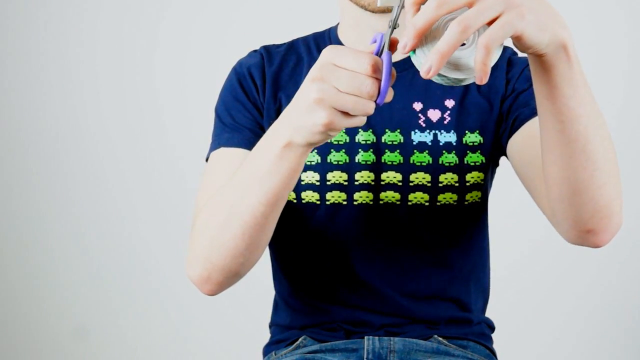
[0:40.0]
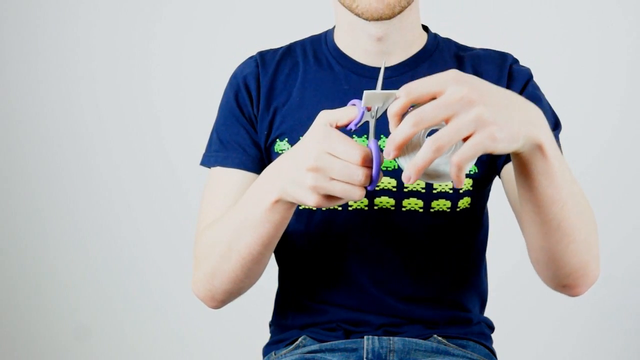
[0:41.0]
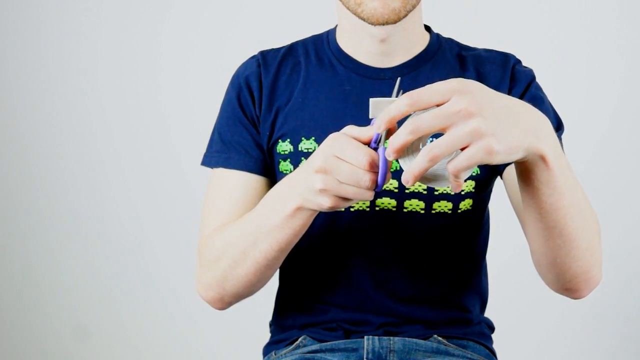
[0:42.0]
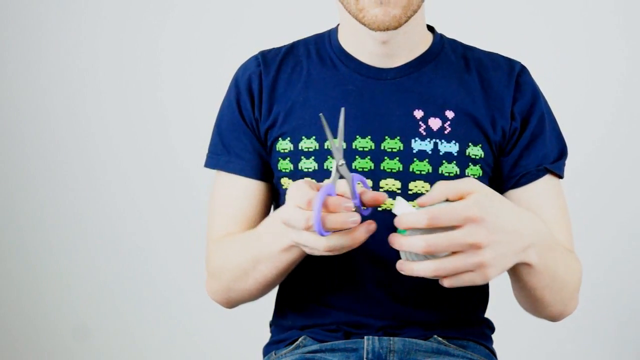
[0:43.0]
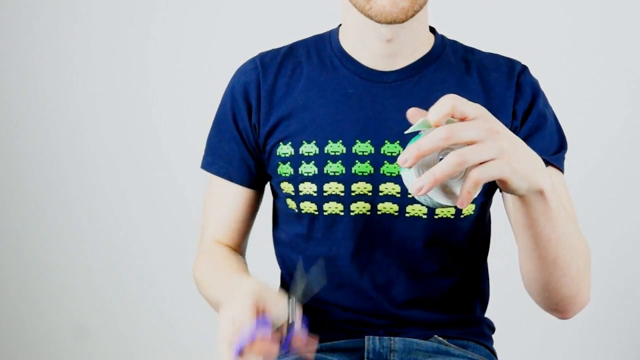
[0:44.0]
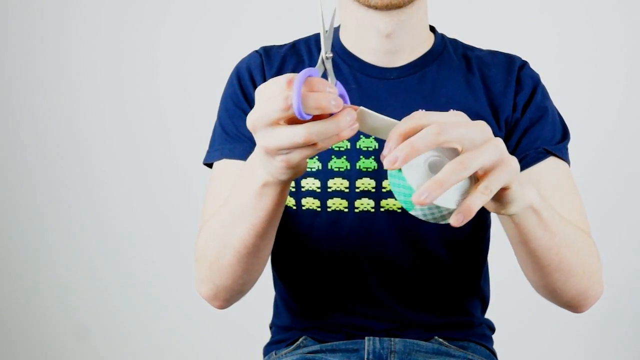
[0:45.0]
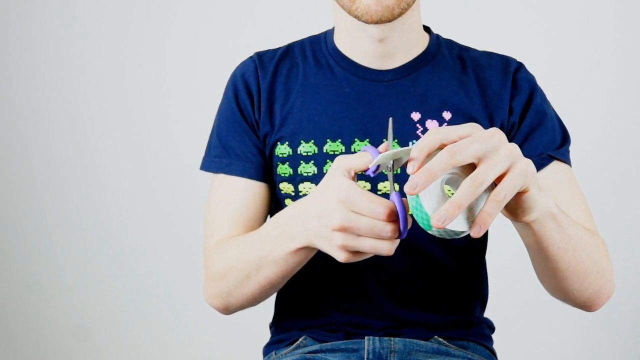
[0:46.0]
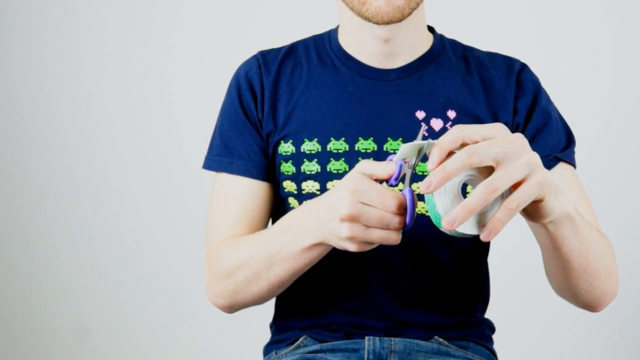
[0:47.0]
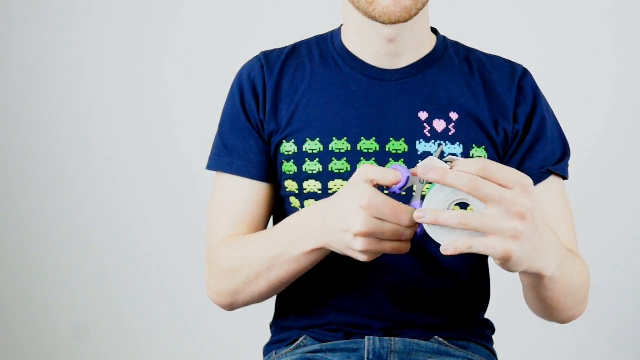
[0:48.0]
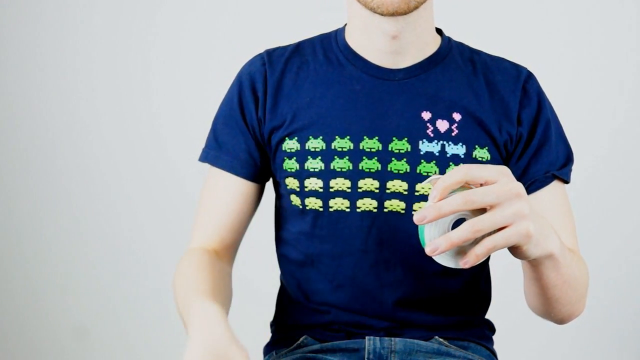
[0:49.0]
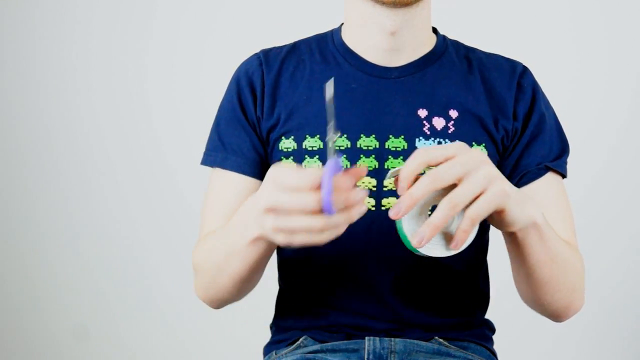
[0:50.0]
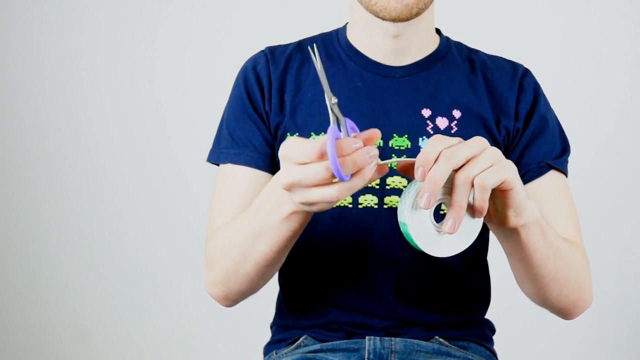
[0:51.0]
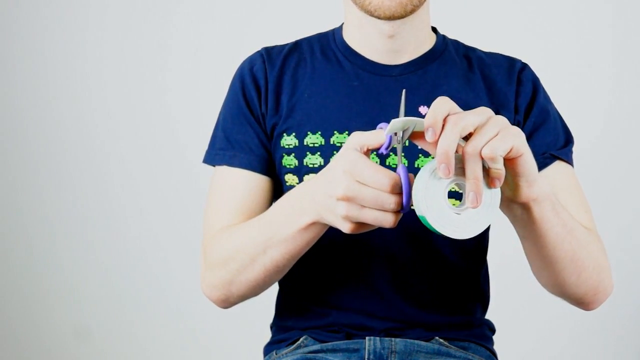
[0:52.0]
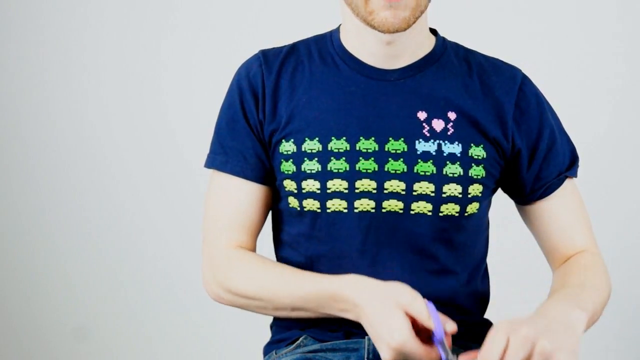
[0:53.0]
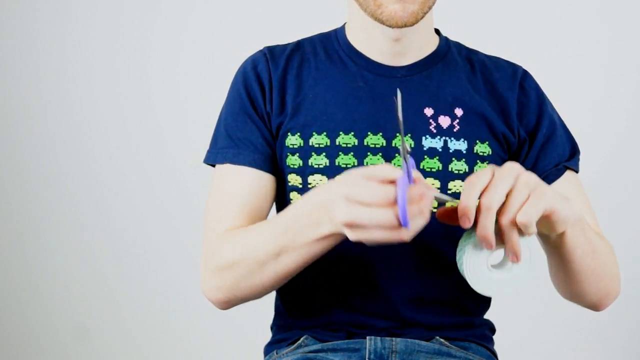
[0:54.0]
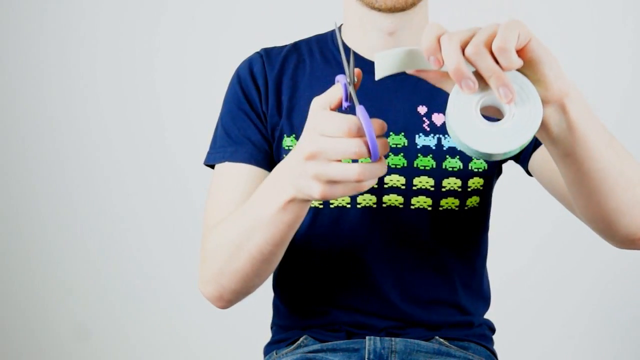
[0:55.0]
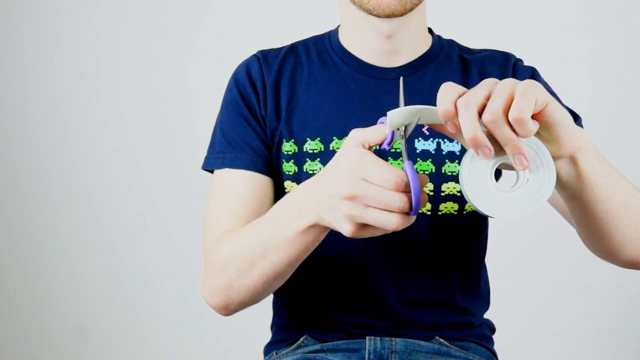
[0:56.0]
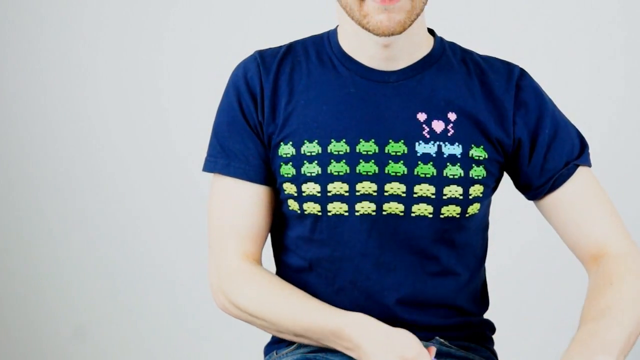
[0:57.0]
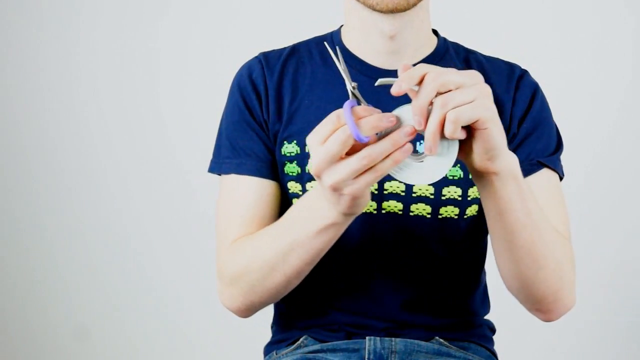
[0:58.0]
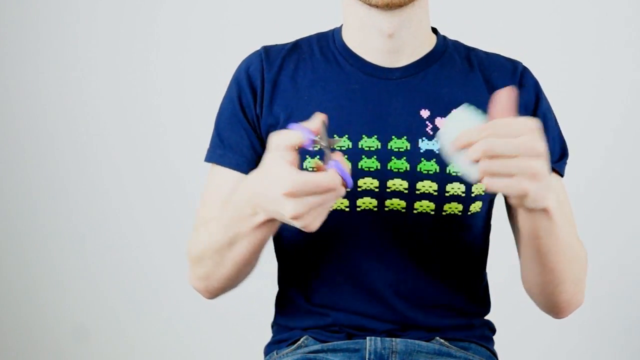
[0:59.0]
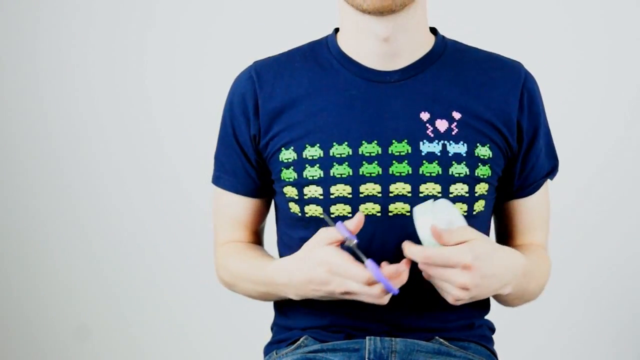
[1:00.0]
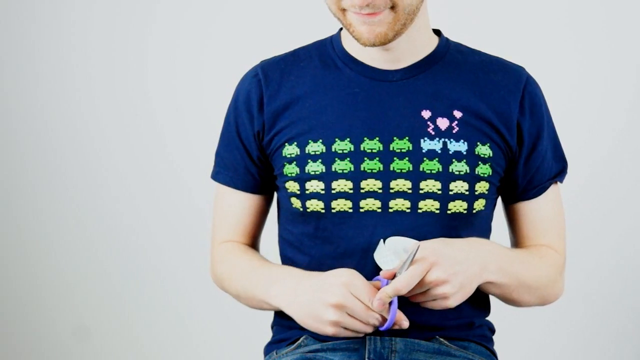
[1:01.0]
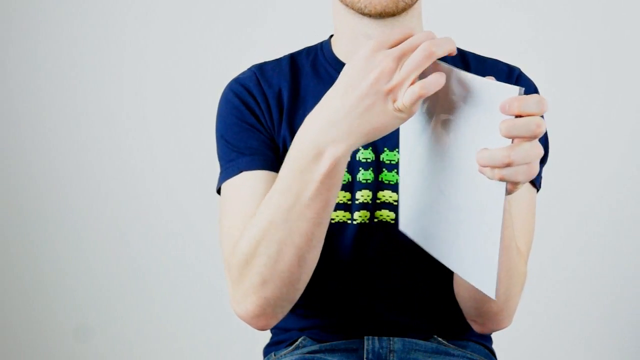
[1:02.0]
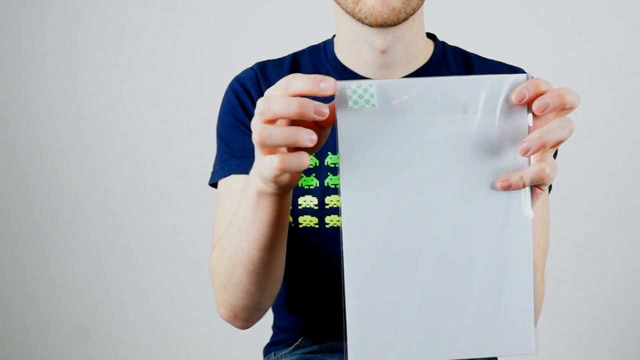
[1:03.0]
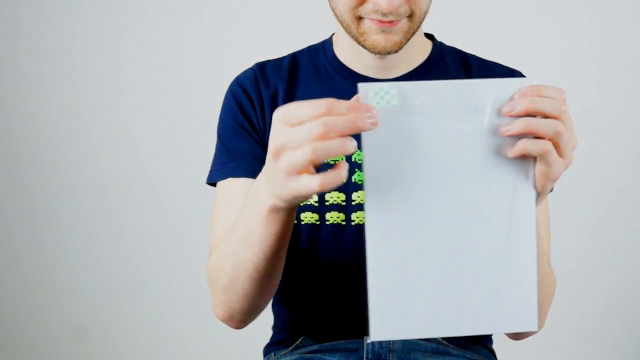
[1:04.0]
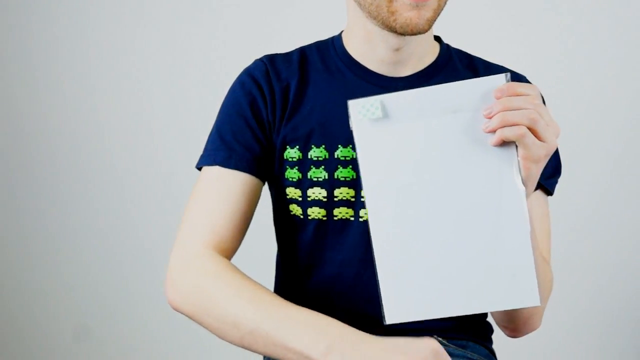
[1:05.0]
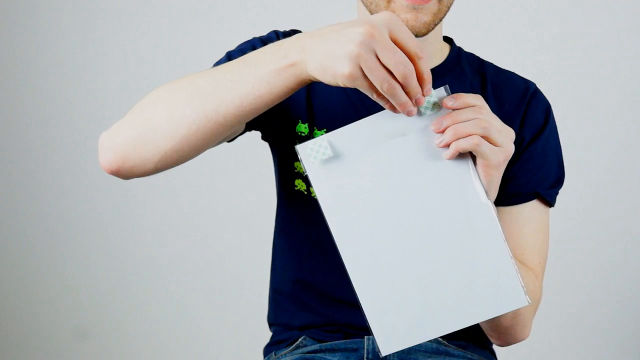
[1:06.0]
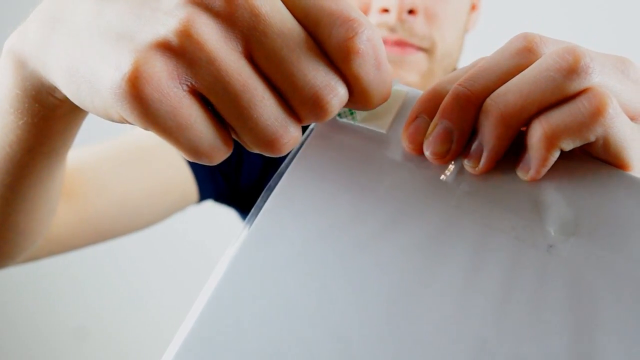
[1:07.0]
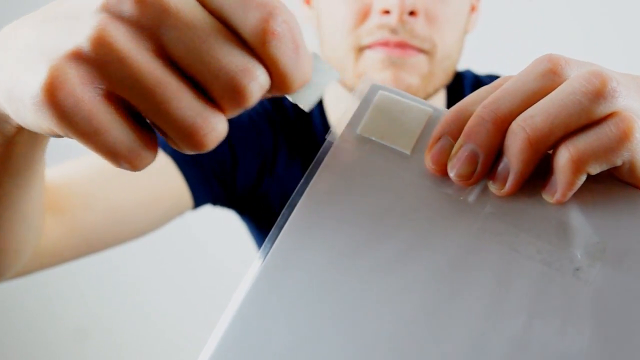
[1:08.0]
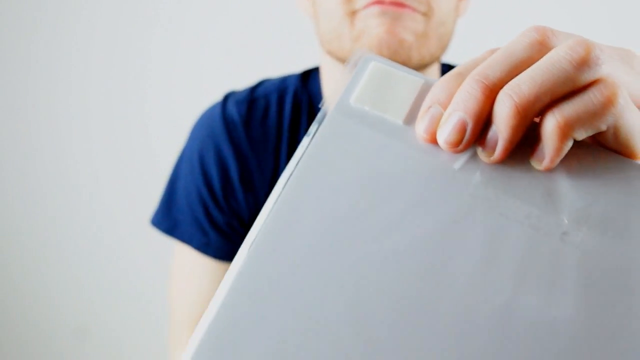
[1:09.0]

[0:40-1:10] The person in the blue shirt cuts off a piece of tape with what looks like light purple scissors. He cuts off another piece, holding the tape in his left hand and the scissors in his right, with his index and middle fingers through the loop of the scissors. He briefly puts his arm to the side, raises the scissors back up, takes another strip of tape, and cuts off just the end of it. The side of the tape is shown from a fairly zoomed-in angle as he cuts off another piece of the end; he seems to be cutting small square pieces off the end of the tape one by one. He points both fingers at himself, then shows a cut piece of tape stuck to the top left corner of an empty white piece of paper wrapped in plastic. He takes the cover off, and it is just a white square stuck on the plastic.